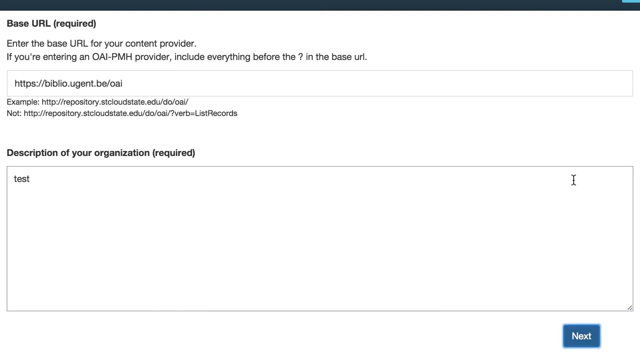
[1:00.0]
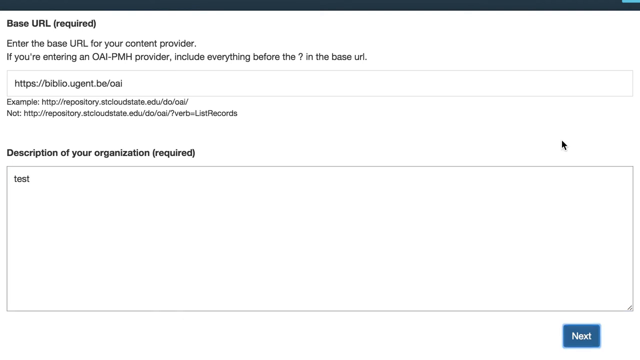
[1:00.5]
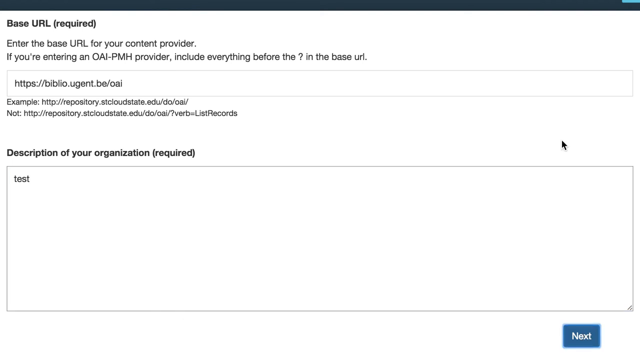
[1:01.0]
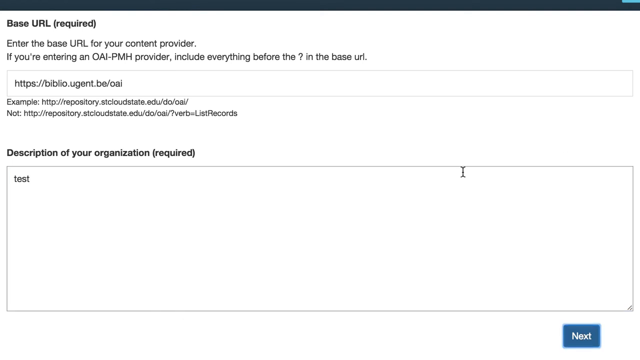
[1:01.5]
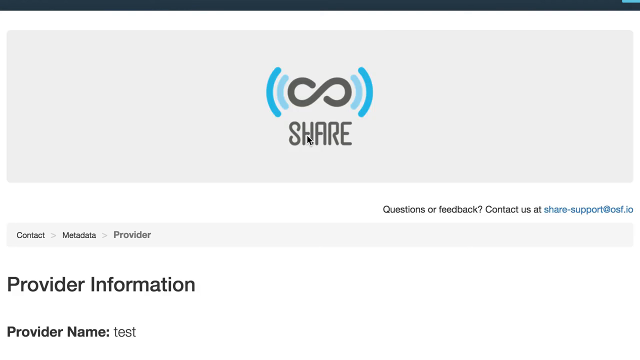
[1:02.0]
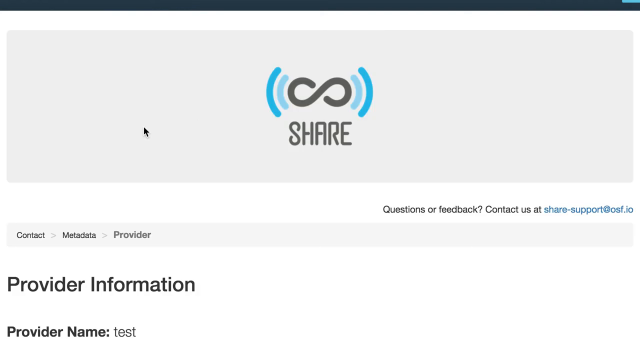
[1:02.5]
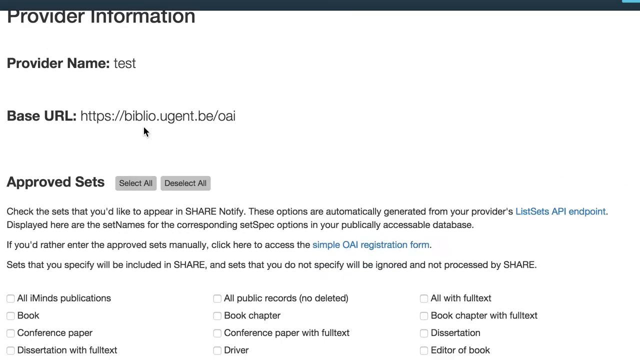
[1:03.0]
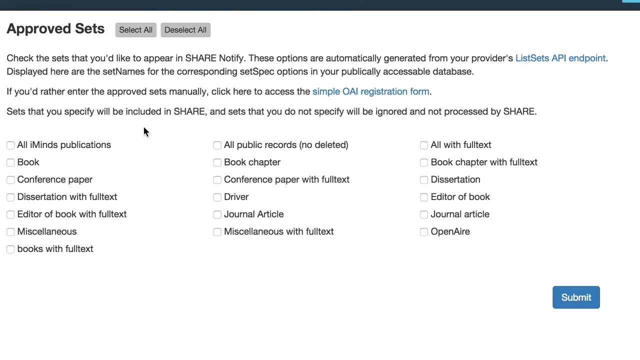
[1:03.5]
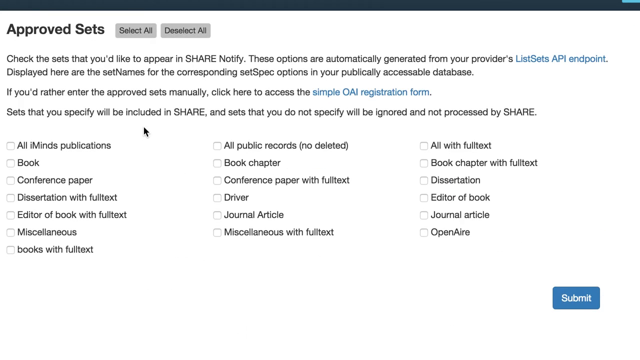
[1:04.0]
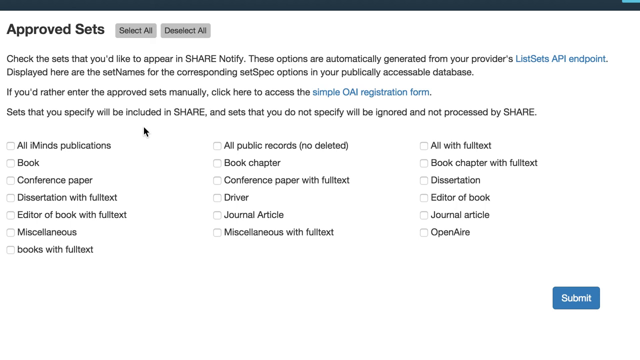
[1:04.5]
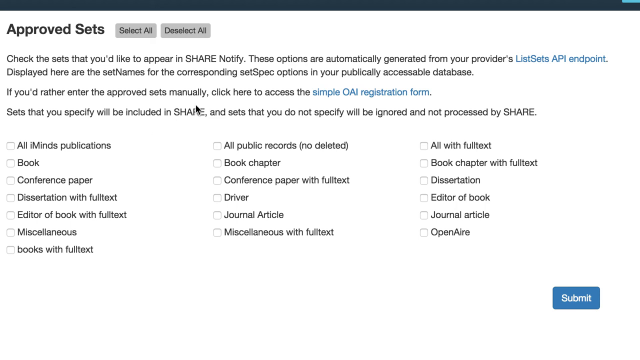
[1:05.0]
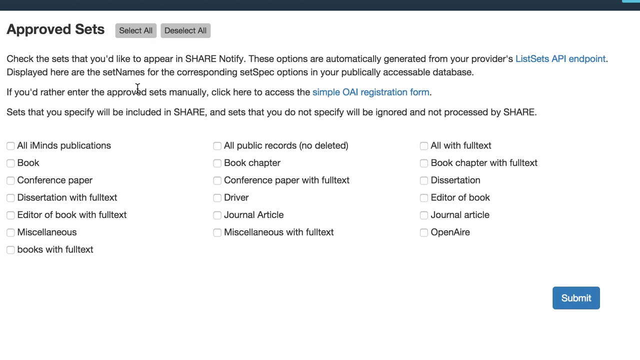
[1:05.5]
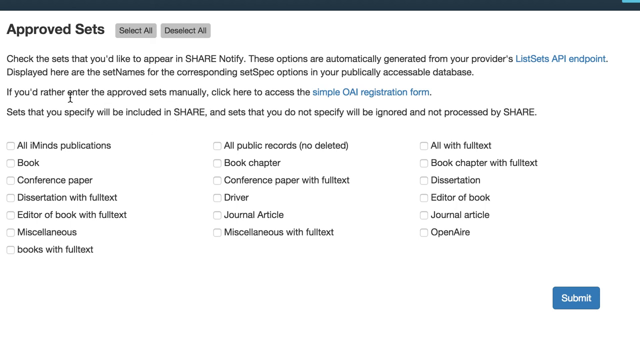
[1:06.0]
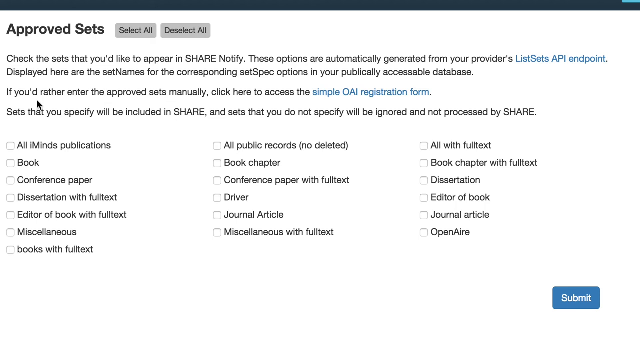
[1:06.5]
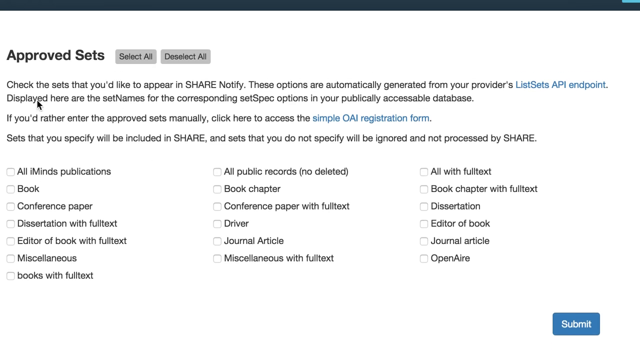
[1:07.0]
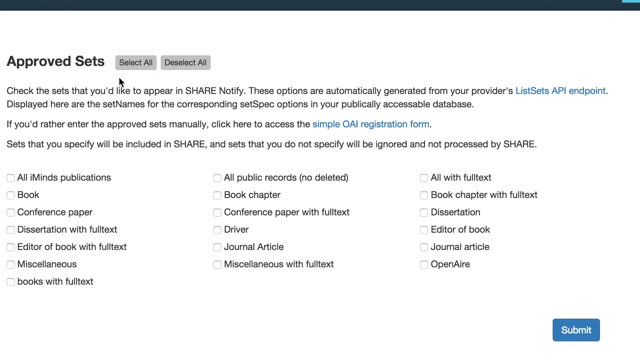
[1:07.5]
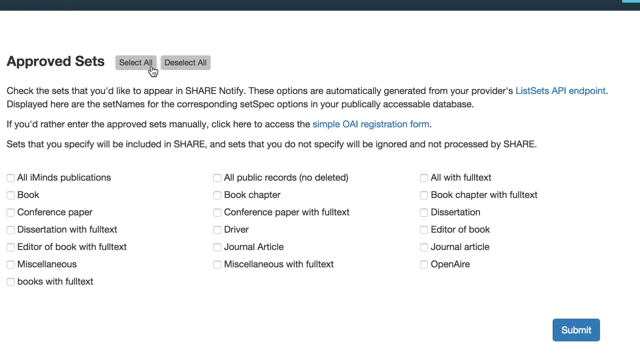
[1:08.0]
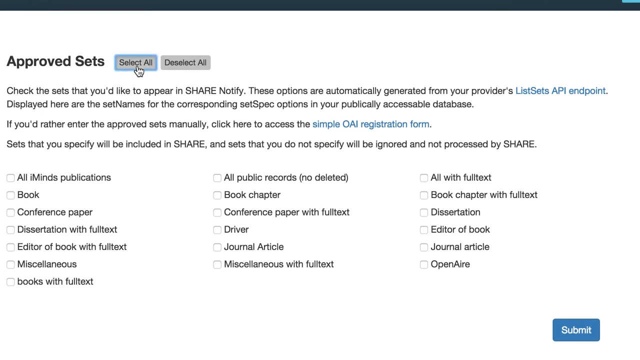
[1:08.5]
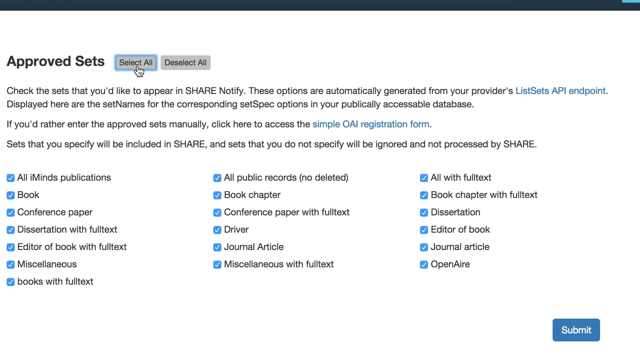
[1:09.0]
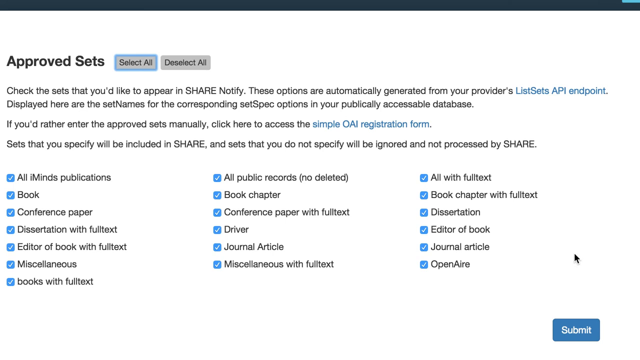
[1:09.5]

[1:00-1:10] The approved sets page of SHARE appears, with the text "Check the sets that you'd like to appear" and "These options are automatically generated from your provider's list API endpoint. If you'd rather enter the approved sets manually, click here." Select all is clicked, and the page returns to the section for writing a description of the organization, which is a required field.